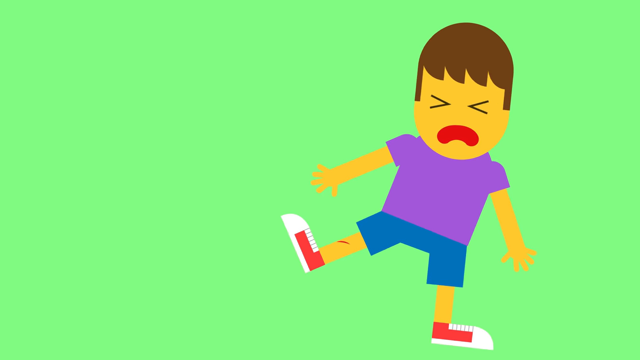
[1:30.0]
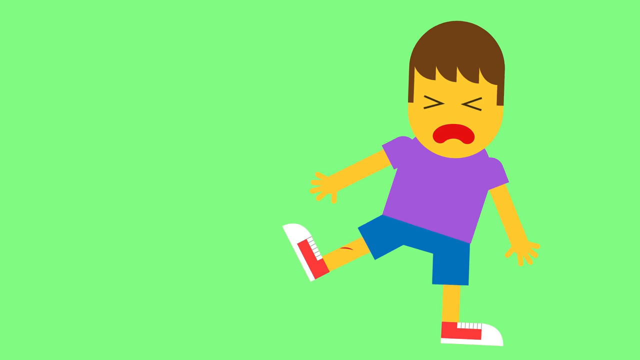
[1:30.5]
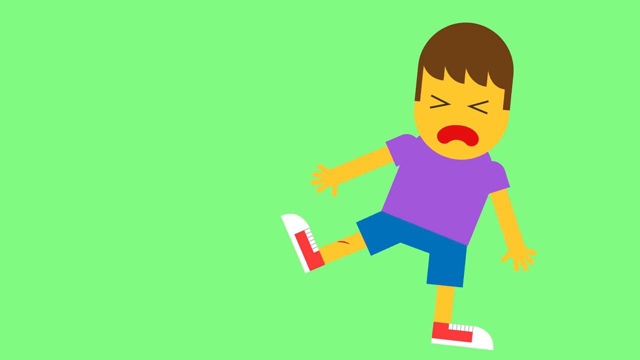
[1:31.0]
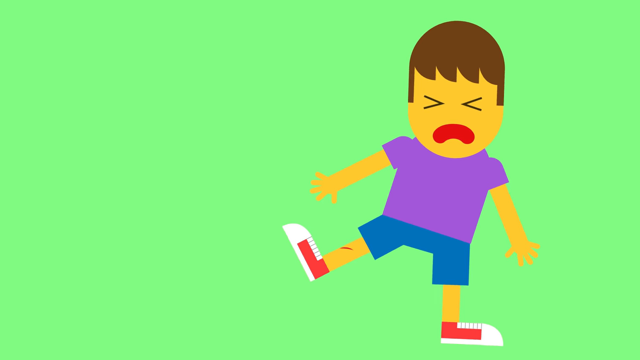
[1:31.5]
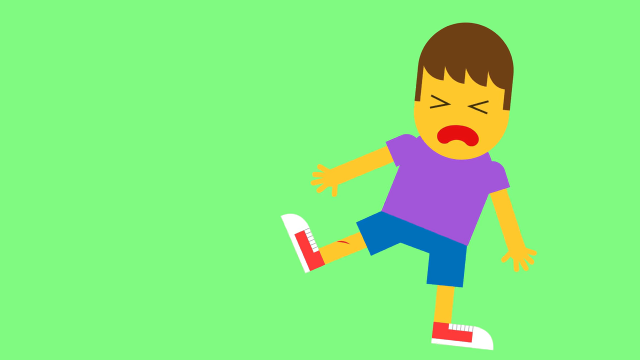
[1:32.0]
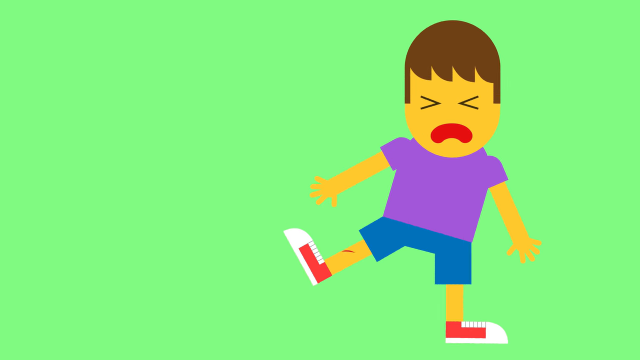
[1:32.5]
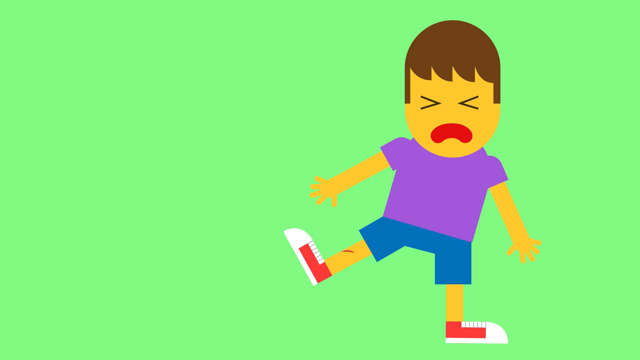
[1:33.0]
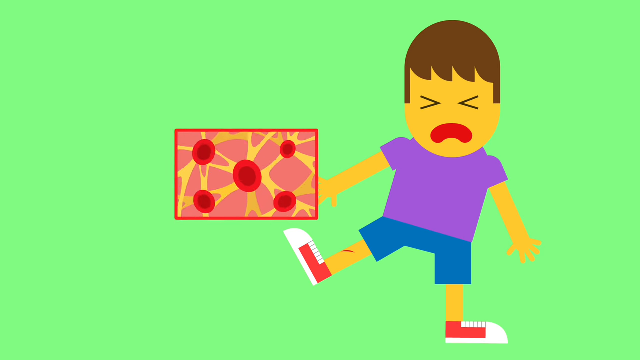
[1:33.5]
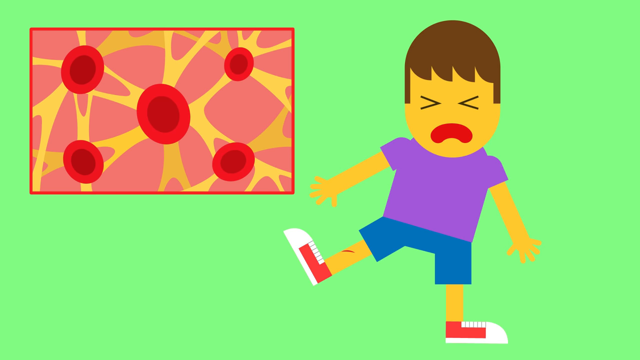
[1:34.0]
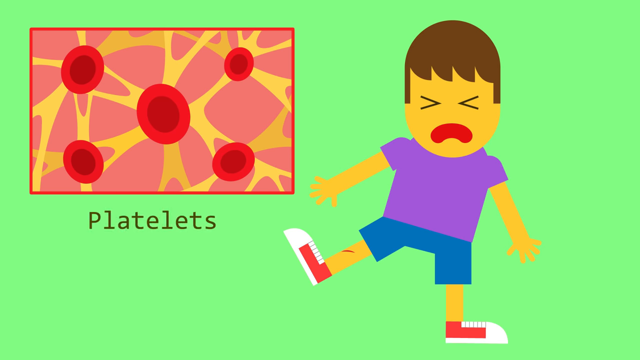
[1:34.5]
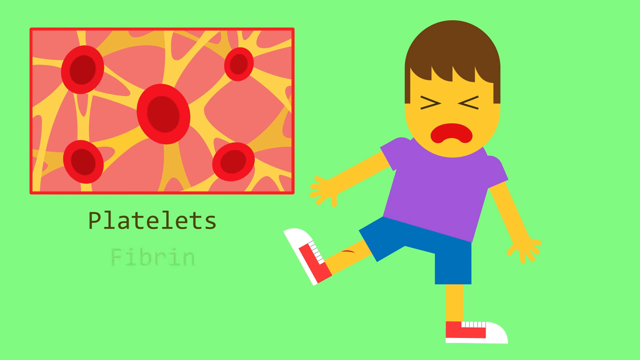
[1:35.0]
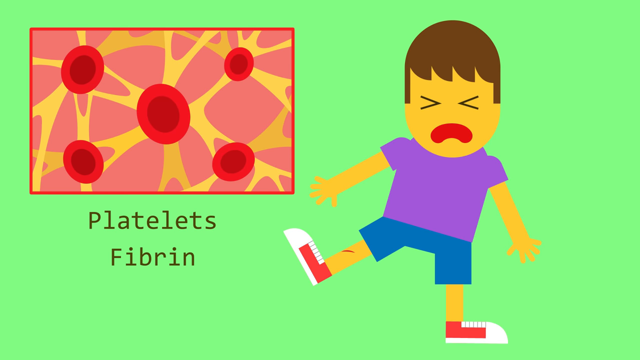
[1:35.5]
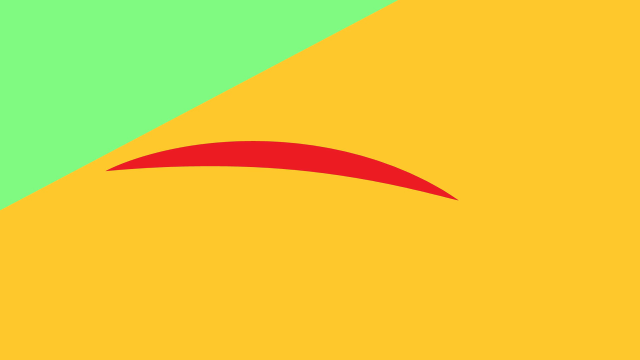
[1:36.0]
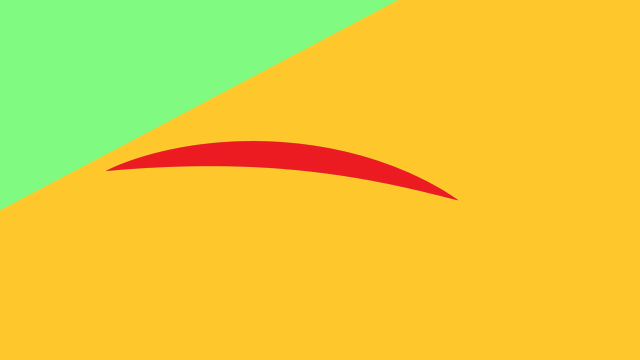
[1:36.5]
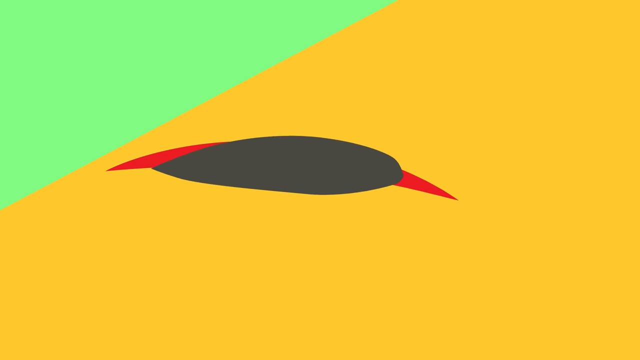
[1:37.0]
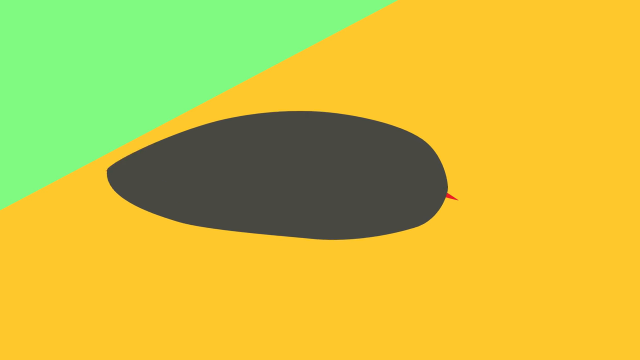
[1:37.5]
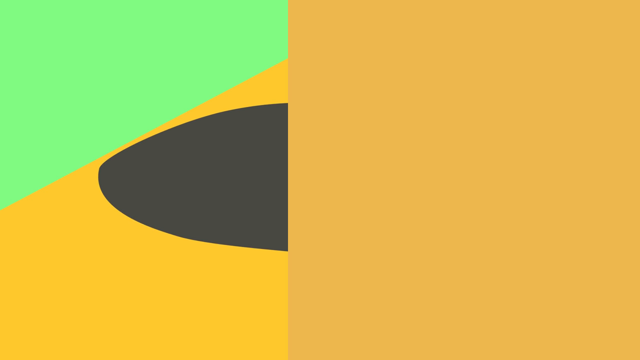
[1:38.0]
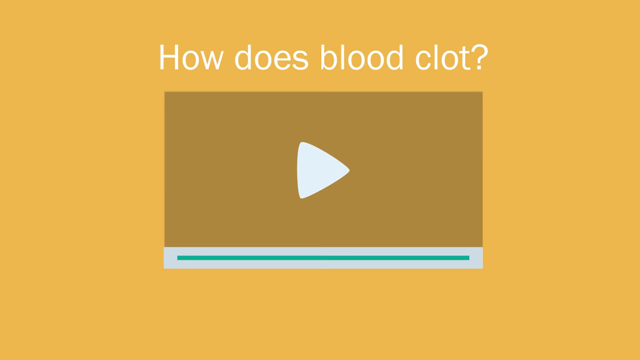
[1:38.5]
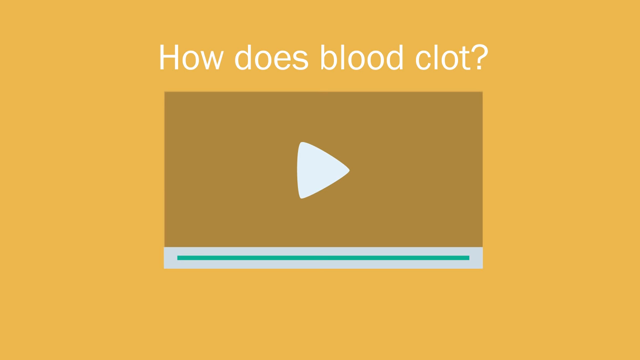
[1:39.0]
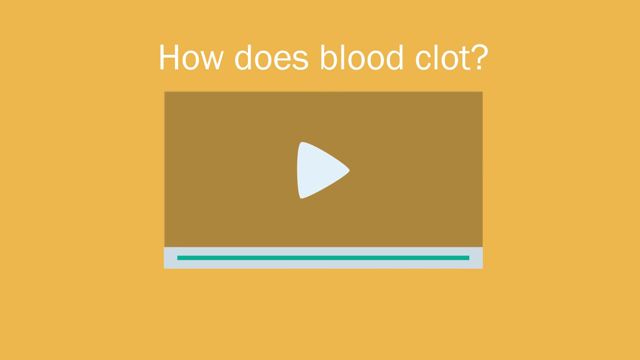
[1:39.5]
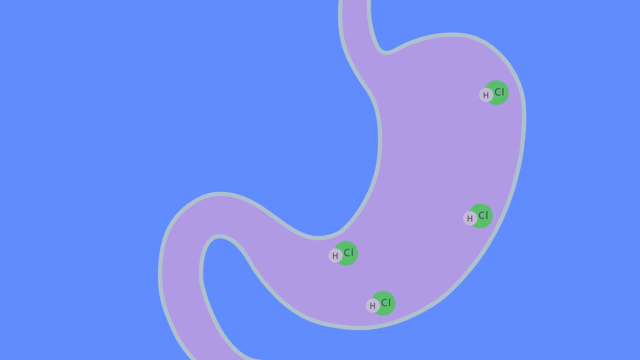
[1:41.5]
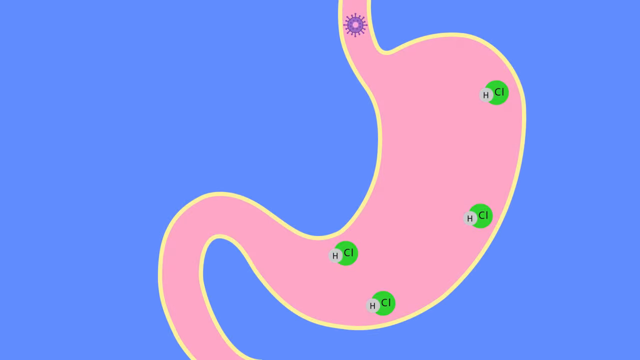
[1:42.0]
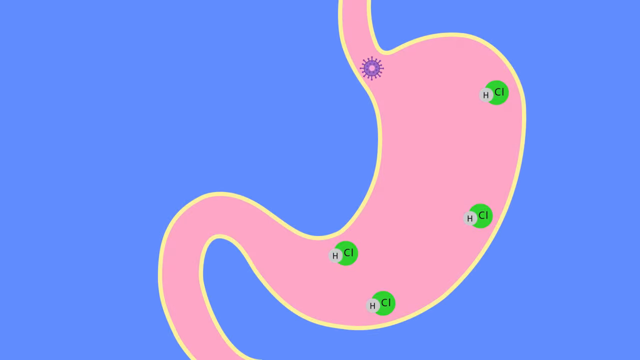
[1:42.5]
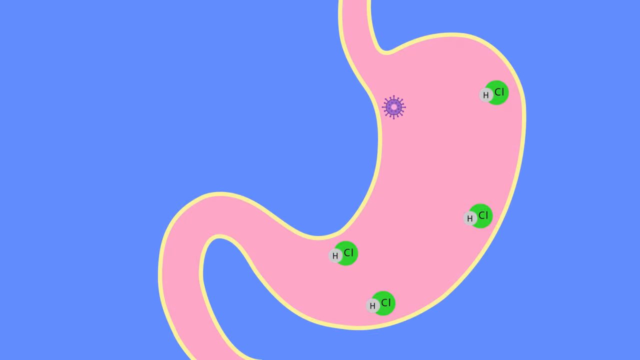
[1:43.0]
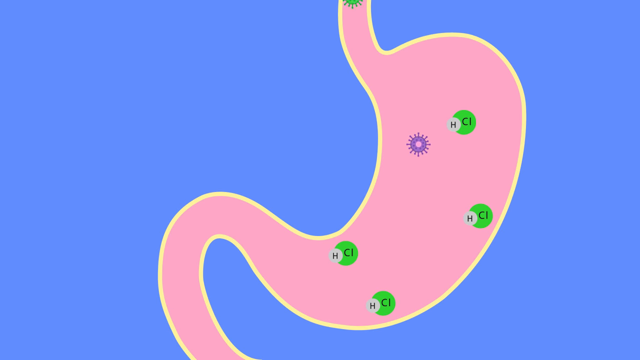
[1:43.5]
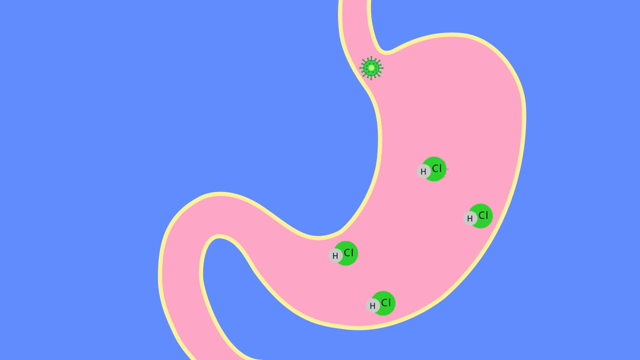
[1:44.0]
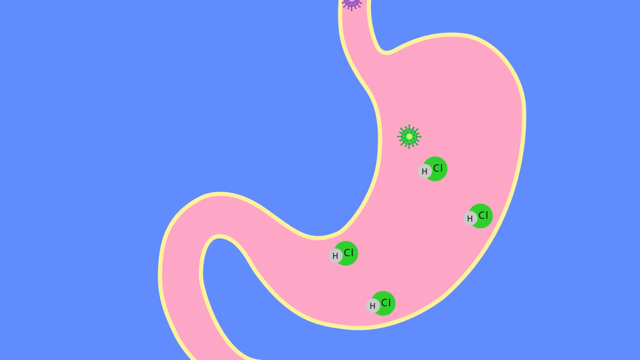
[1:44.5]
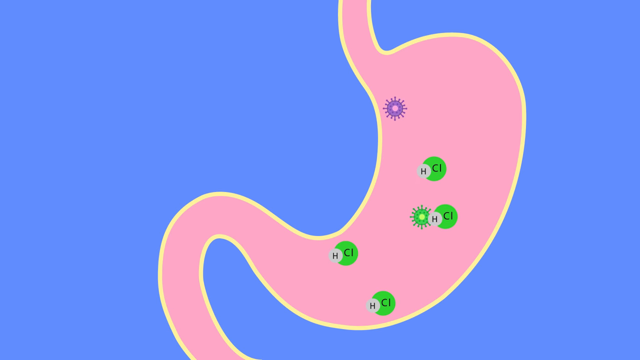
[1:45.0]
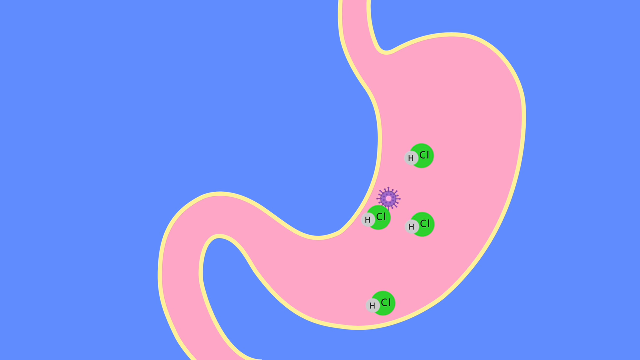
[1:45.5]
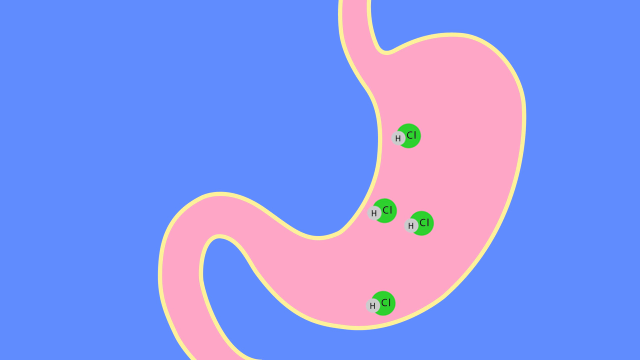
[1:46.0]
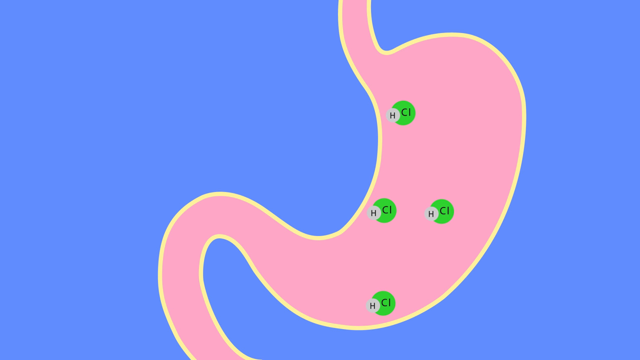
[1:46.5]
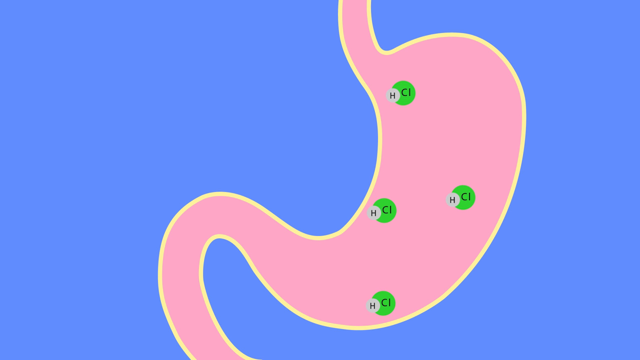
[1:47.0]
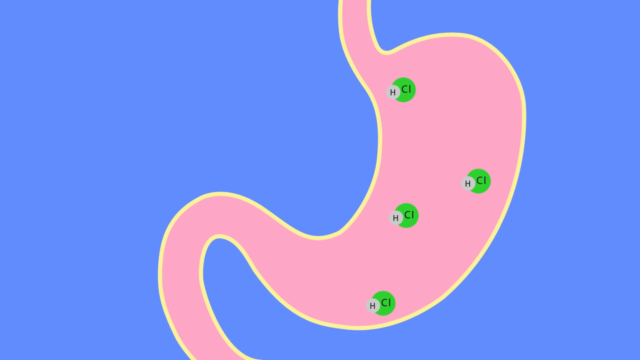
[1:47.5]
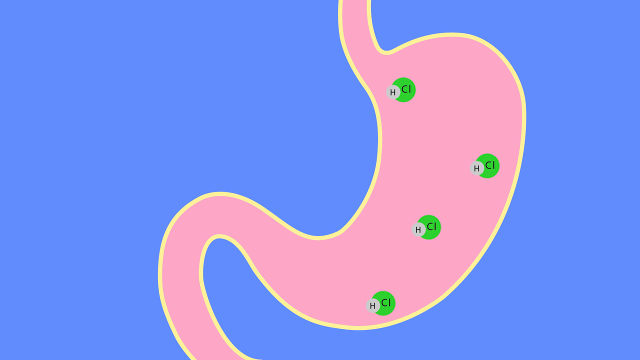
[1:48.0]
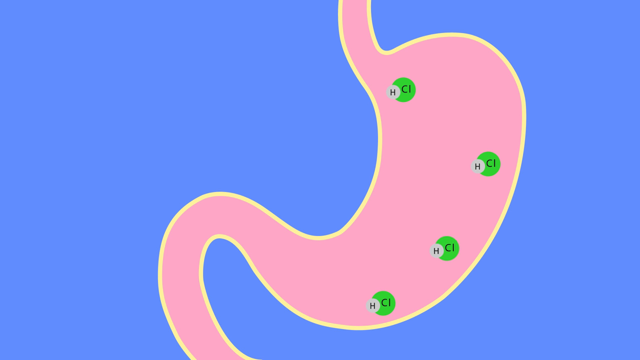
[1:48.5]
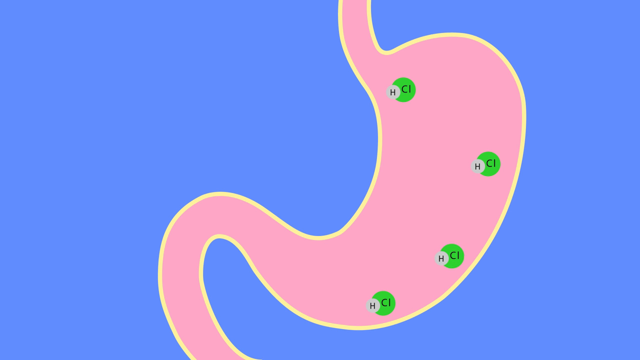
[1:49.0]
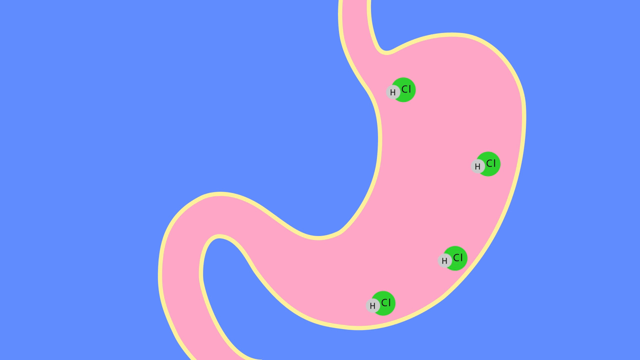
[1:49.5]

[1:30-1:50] The boy wears a purple t-shirt, blue shorts and red and white shoes, has white lips and brown hair, and his eyes appear to be closed. He looks like he is crying and moves a bit. The question "How does blood clot?" is displayed at the top. A virus is shown entering. After the boy is hurt, blood clotting is shown at the scratch on his leg.